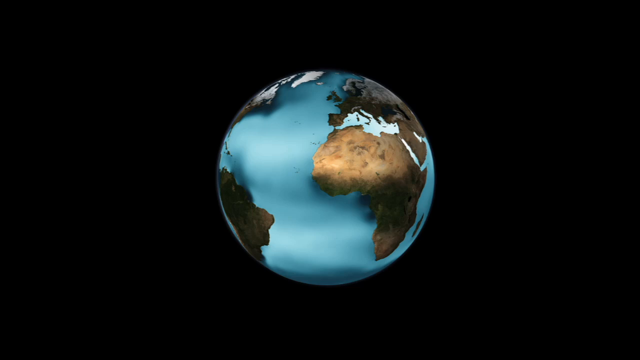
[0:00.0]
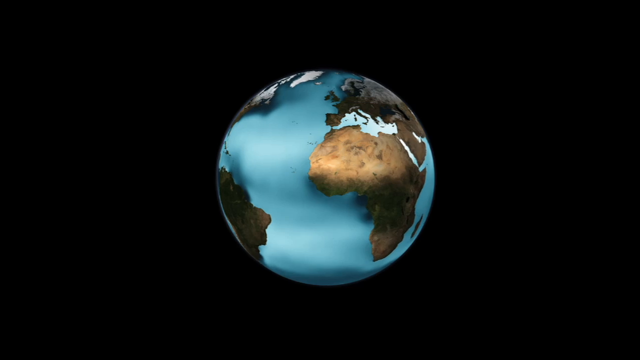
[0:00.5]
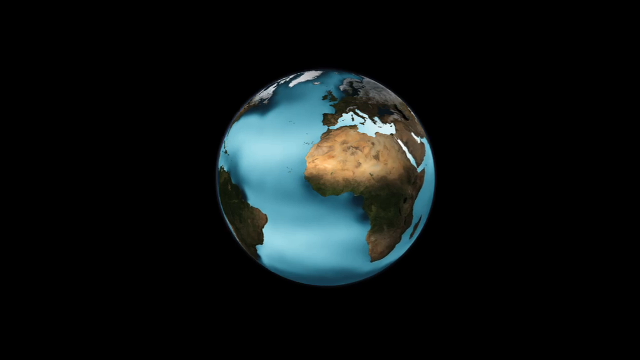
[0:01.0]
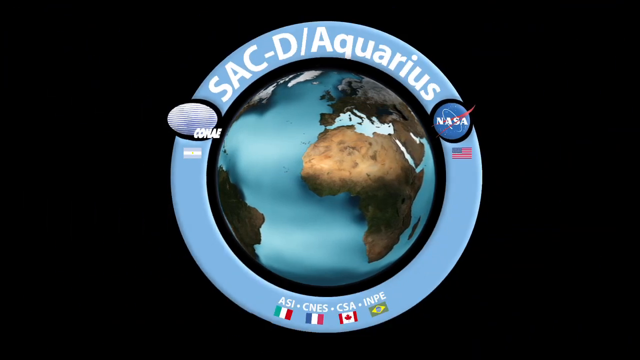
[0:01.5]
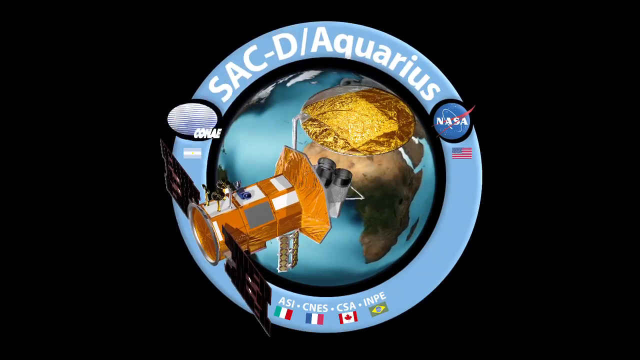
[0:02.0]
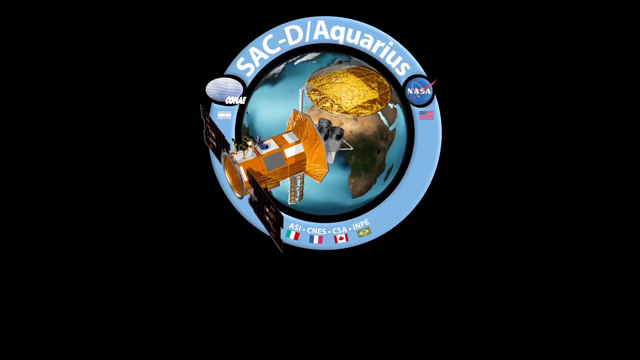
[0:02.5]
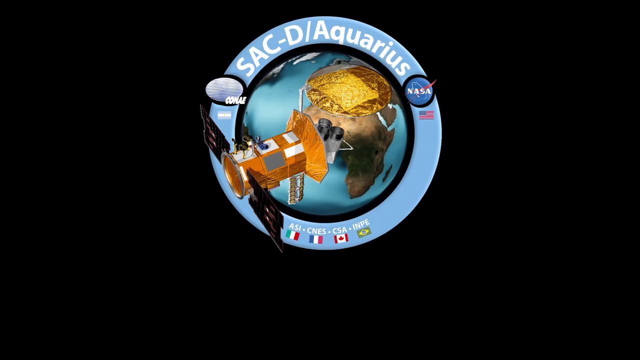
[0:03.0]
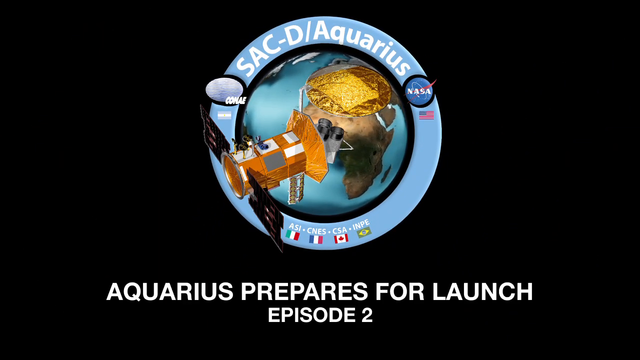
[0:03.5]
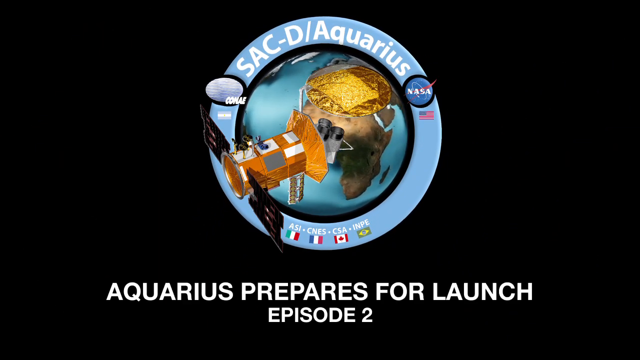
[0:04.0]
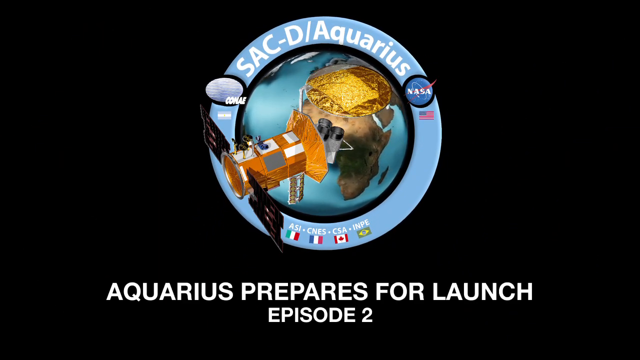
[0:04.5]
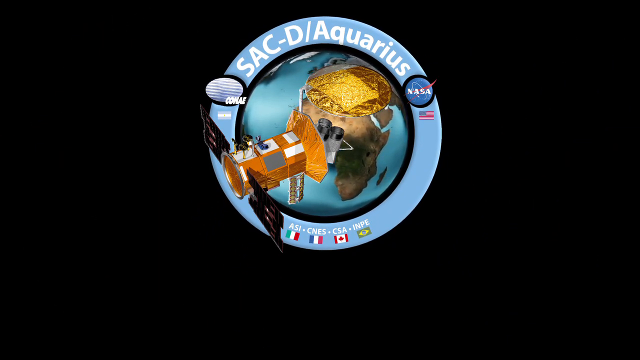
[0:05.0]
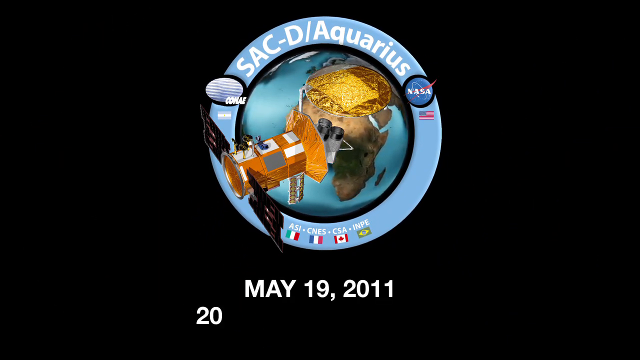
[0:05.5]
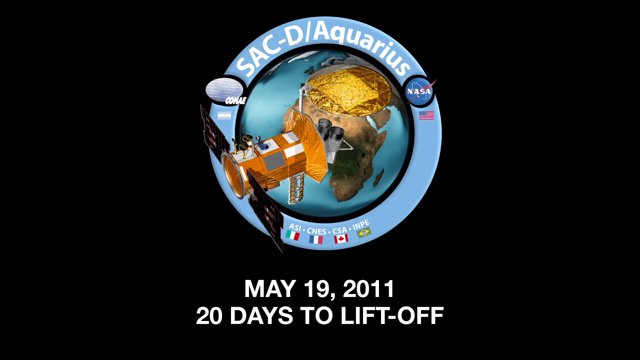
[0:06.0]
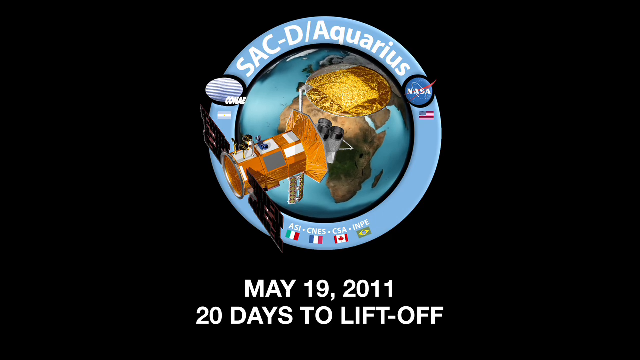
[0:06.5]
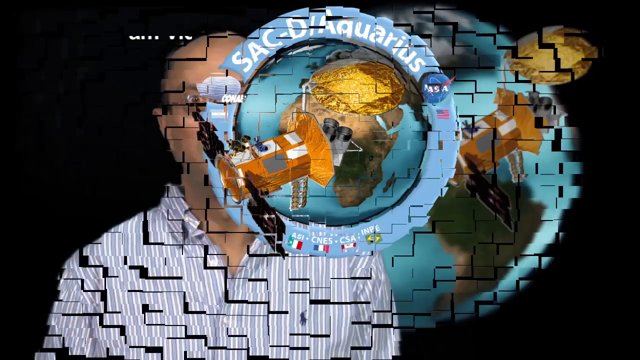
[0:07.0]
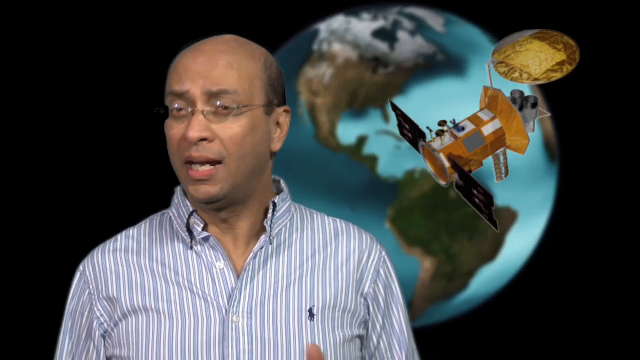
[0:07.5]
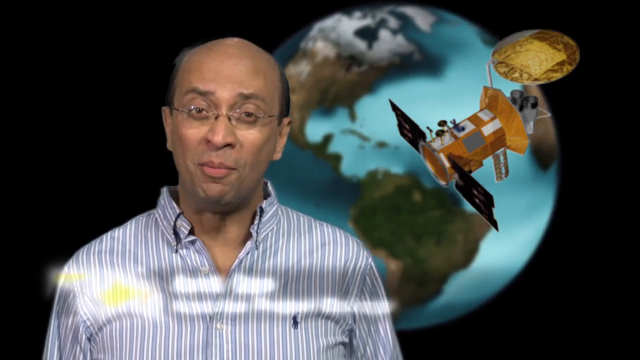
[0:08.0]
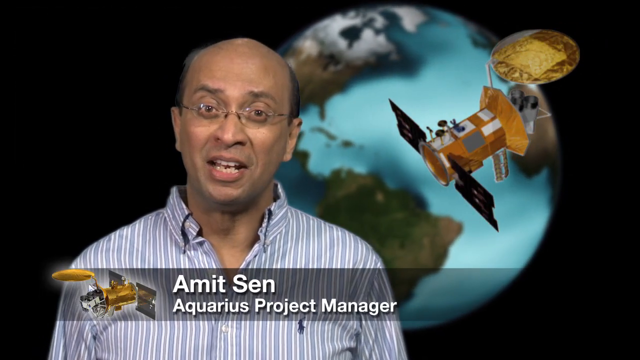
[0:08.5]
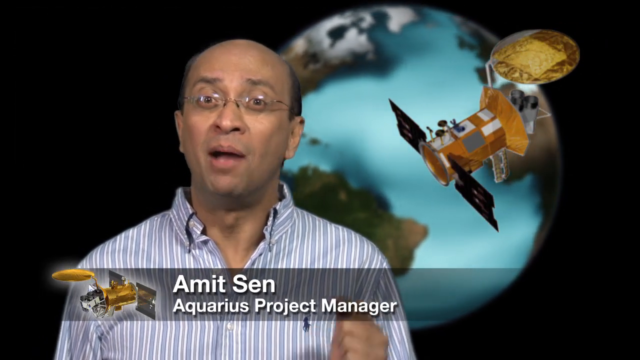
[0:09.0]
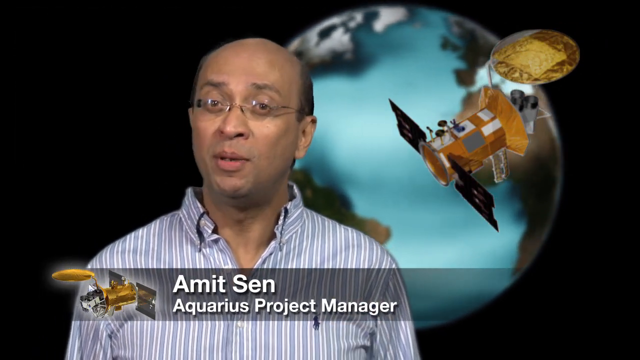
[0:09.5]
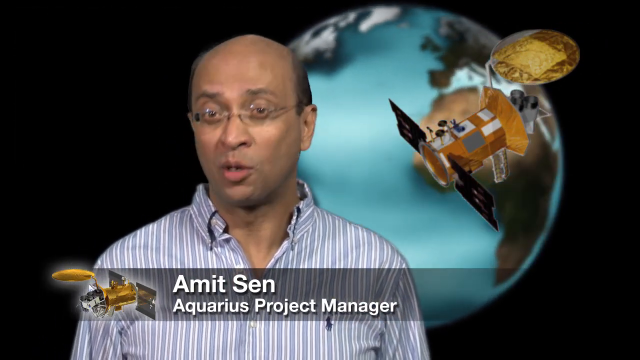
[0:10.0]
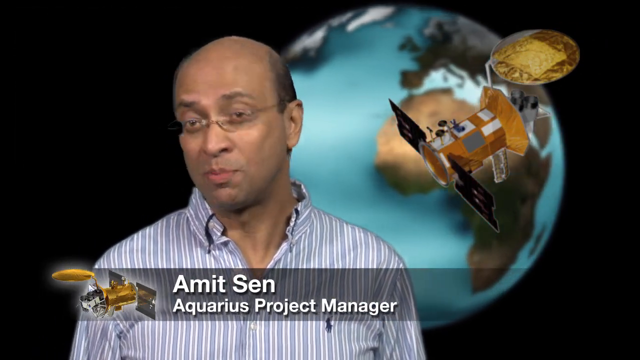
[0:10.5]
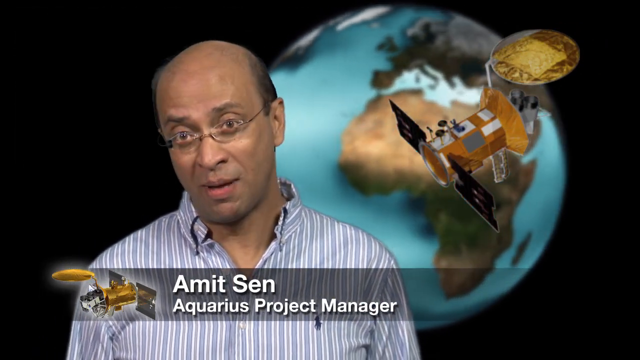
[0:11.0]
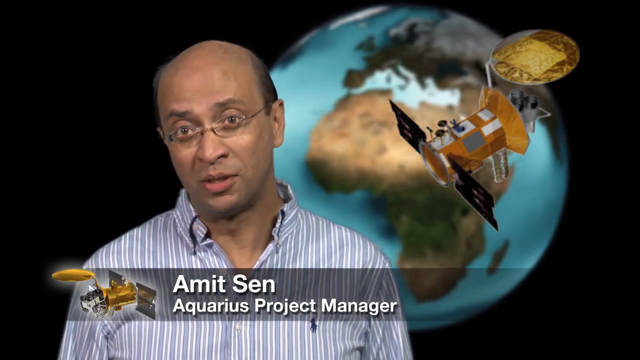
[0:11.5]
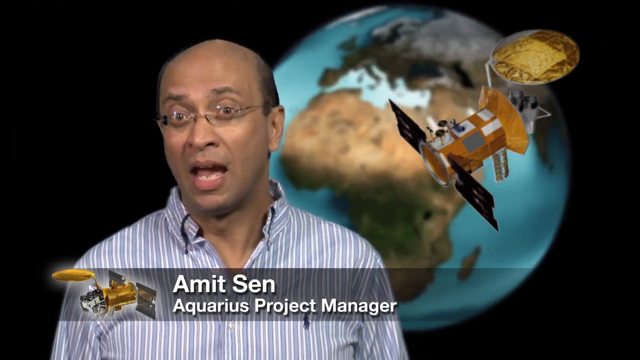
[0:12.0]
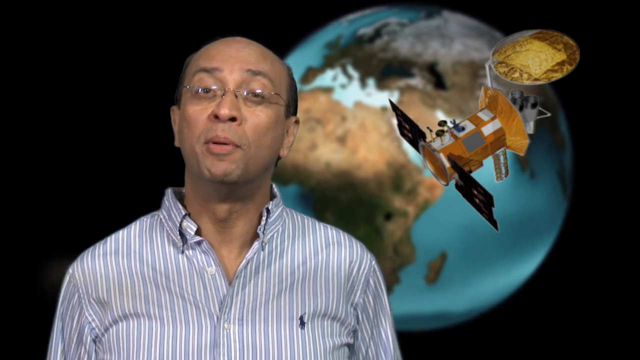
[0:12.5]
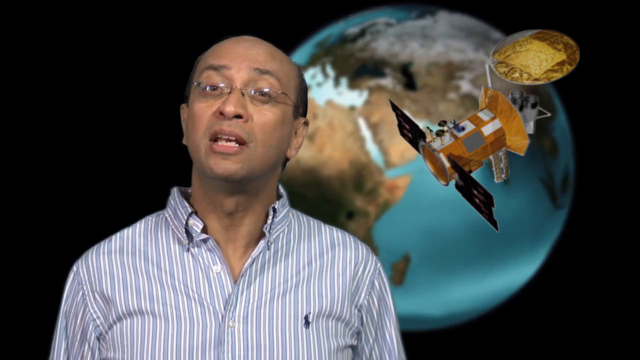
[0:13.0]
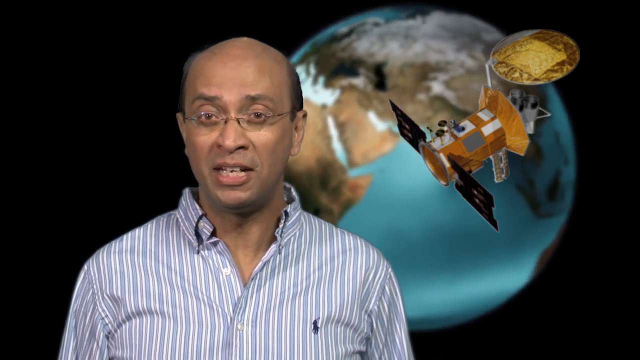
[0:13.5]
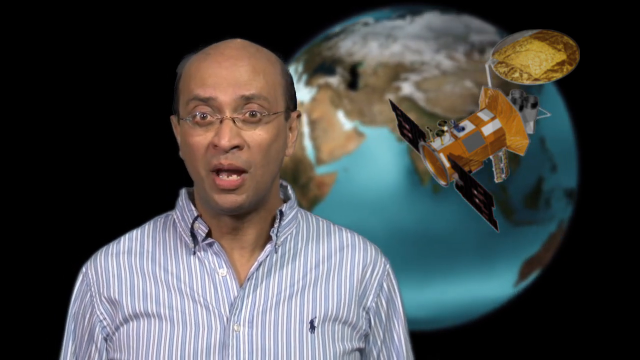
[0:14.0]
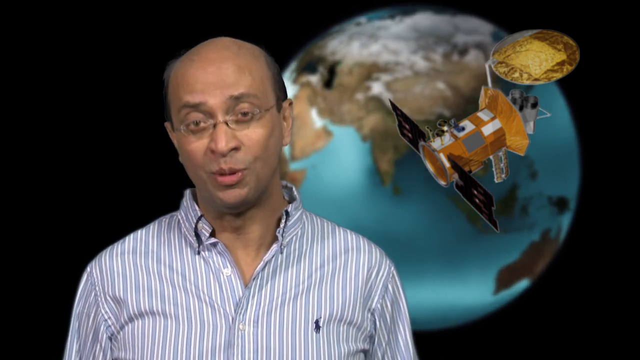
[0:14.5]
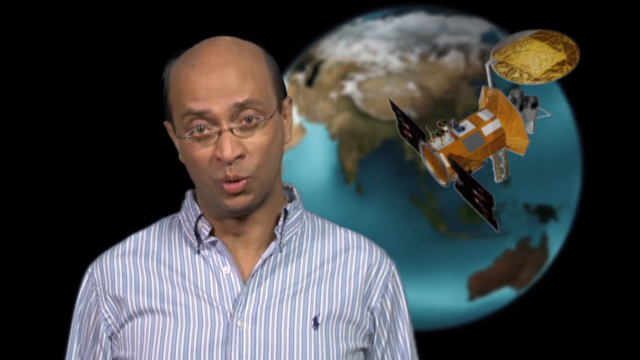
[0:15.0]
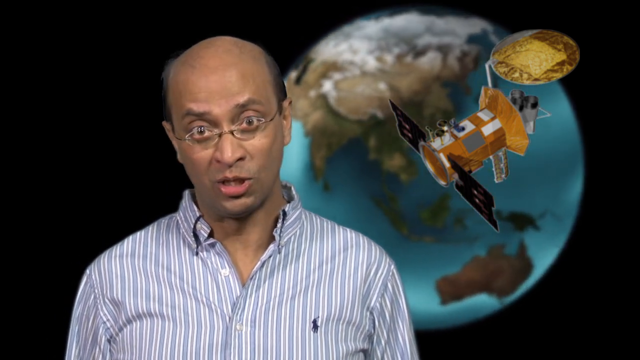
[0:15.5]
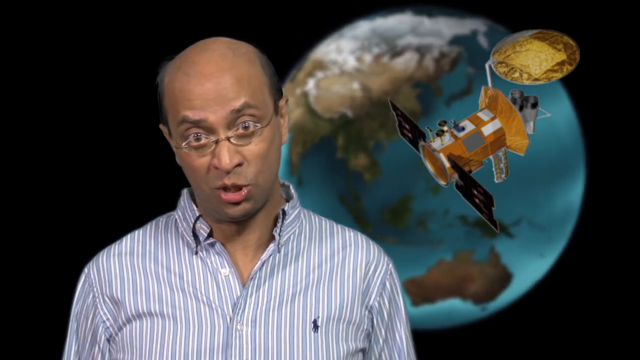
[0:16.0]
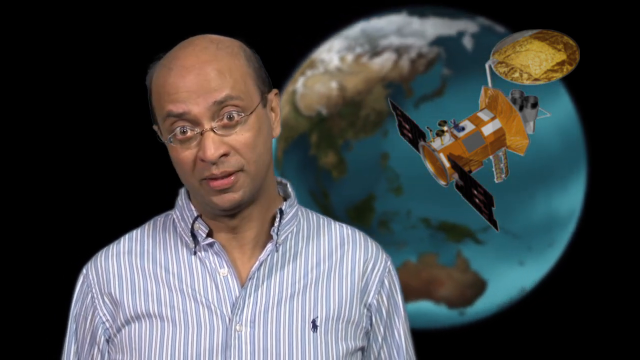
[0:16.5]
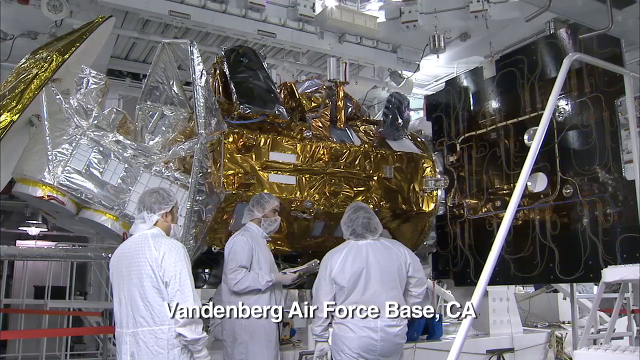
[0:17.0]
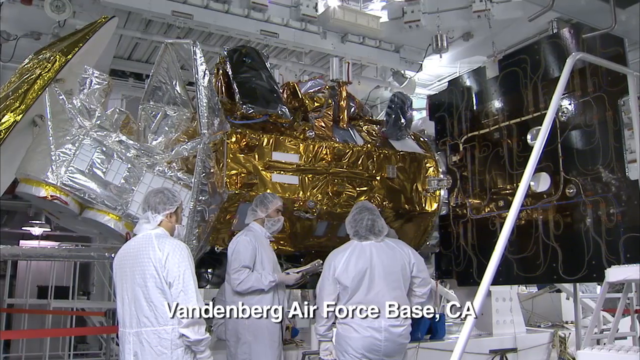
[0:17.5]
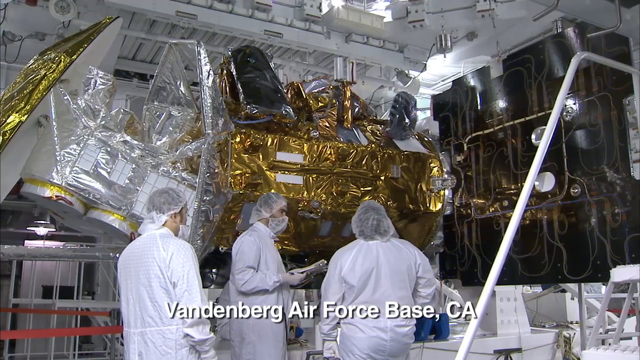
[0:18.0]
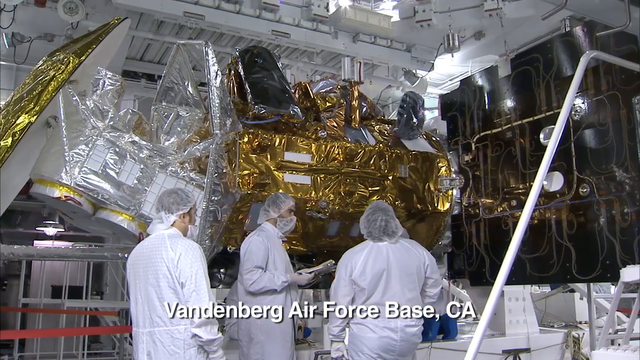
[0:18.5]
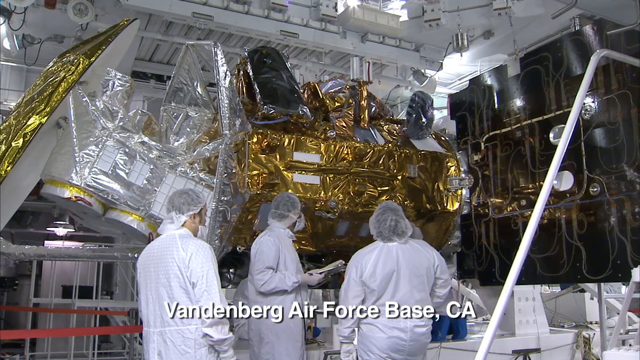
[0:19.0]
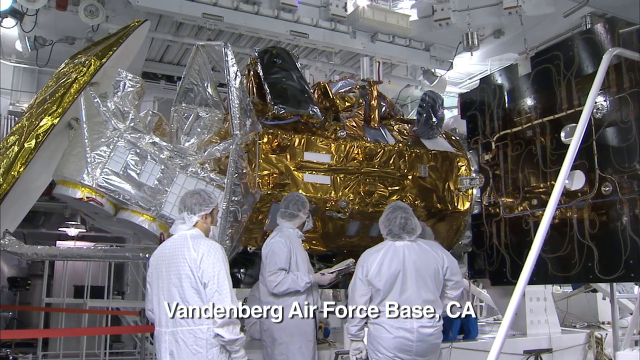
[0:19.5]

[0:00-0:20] Against a black background, an image of the Earth spins, showing its different areas of land and water. Another circle comes around the Earth bearing the text "SAC-D/Aquarius," with "NASA" on one side. There appears to be some sort of satellite in the picture as well. Text at the bottom reads "Aquarius prepares for launch episode 2," then changes to "May 19, 2011, 20 days to lift off." The video then shows a man wearing glasses talking directly into the camera. A label at the bottom of the screen gives his name, "Amit Sen," and below that reads "Aquarius Project Manager." In the background, the image of the world is still circling around.